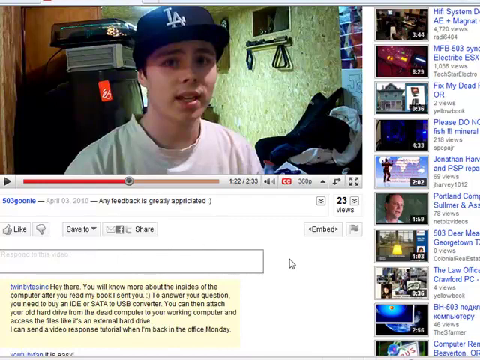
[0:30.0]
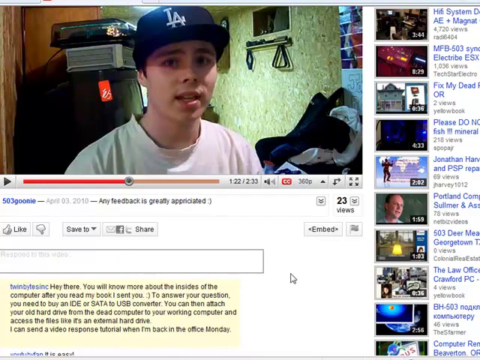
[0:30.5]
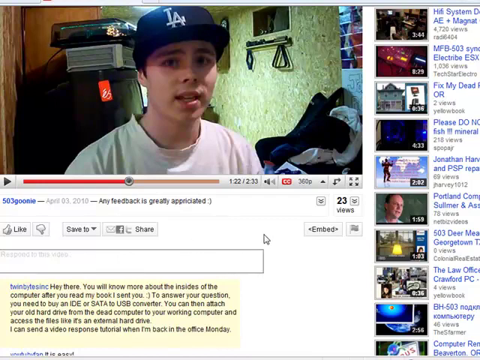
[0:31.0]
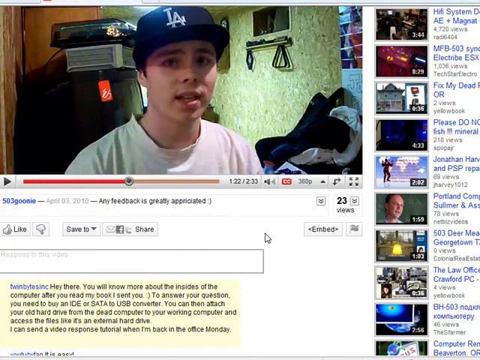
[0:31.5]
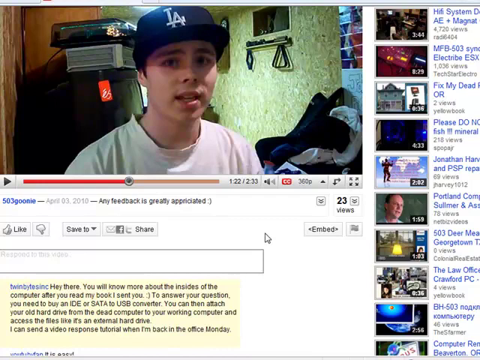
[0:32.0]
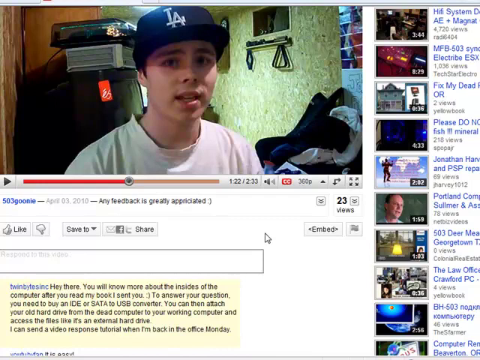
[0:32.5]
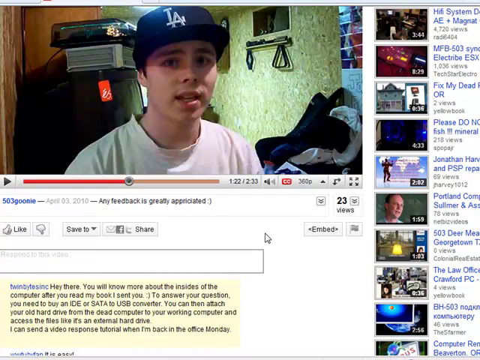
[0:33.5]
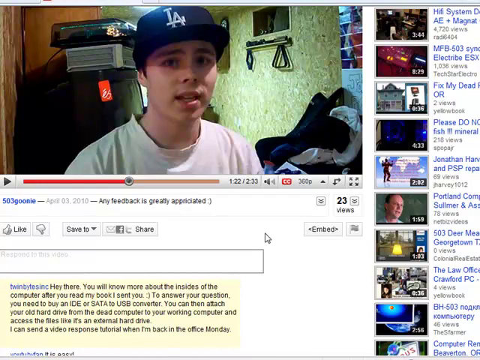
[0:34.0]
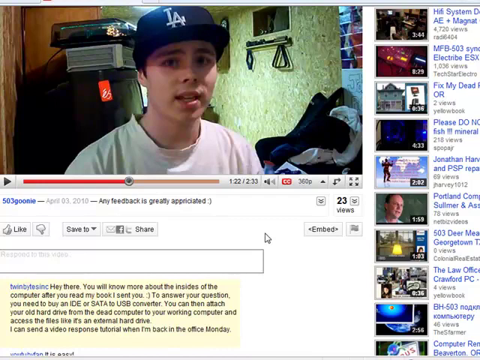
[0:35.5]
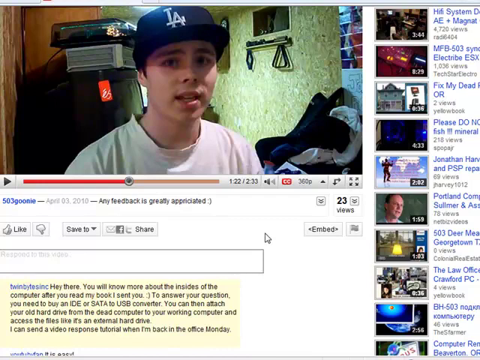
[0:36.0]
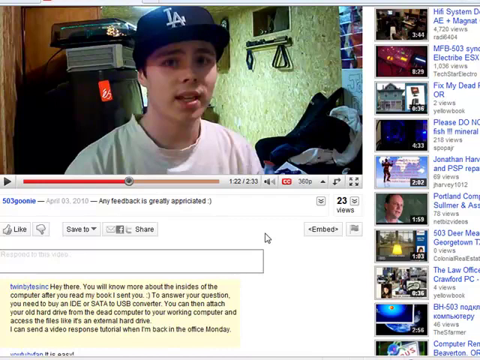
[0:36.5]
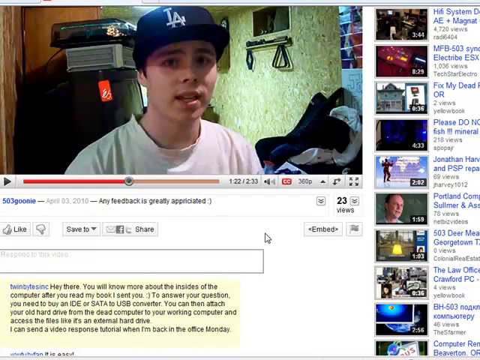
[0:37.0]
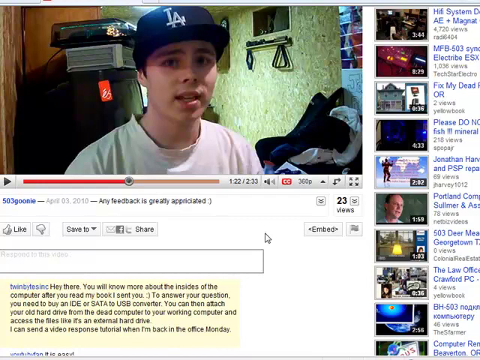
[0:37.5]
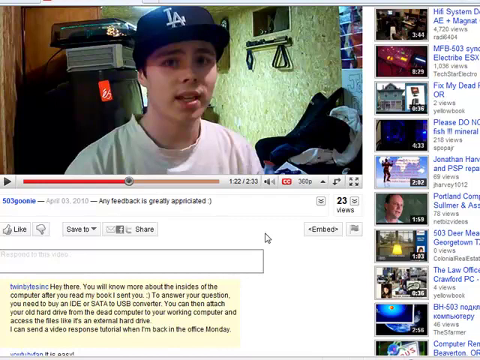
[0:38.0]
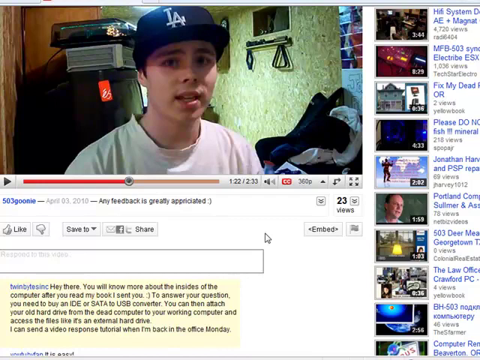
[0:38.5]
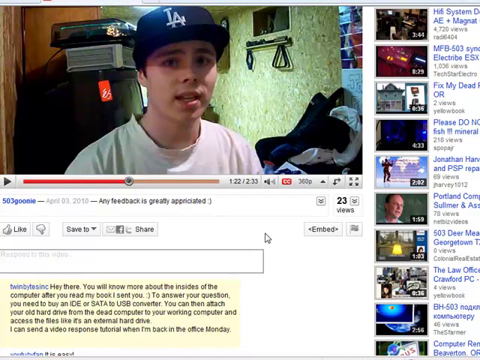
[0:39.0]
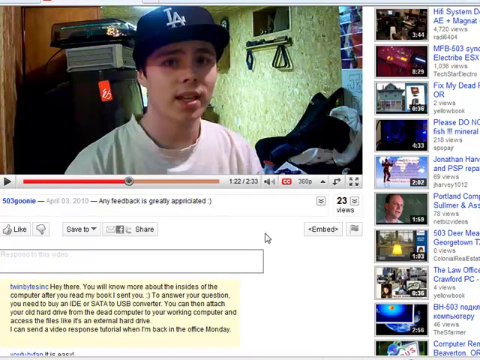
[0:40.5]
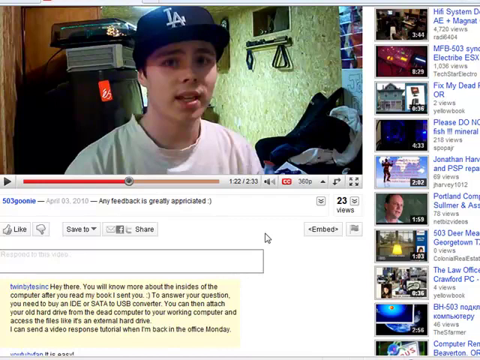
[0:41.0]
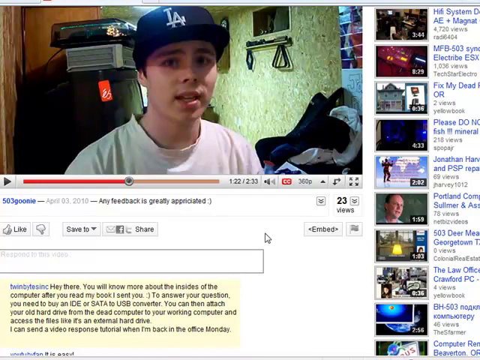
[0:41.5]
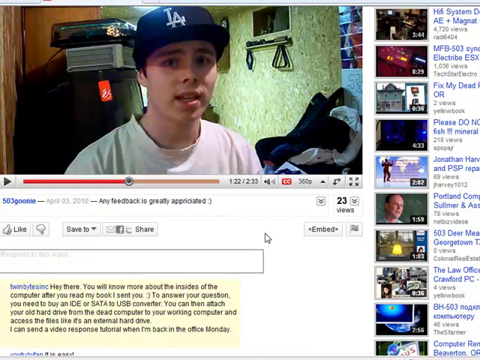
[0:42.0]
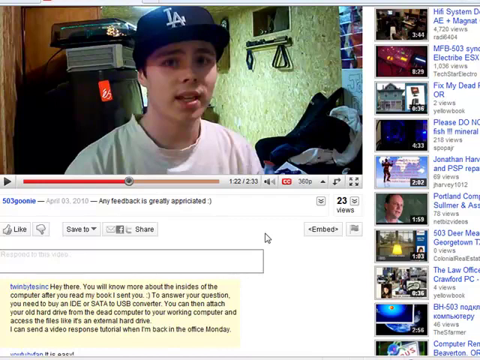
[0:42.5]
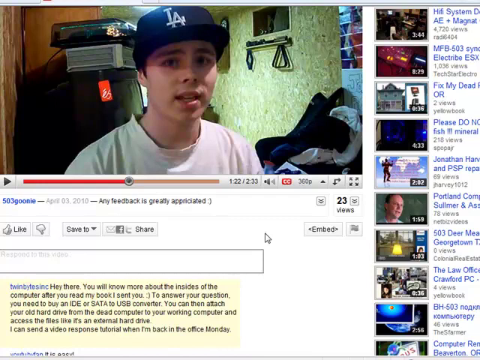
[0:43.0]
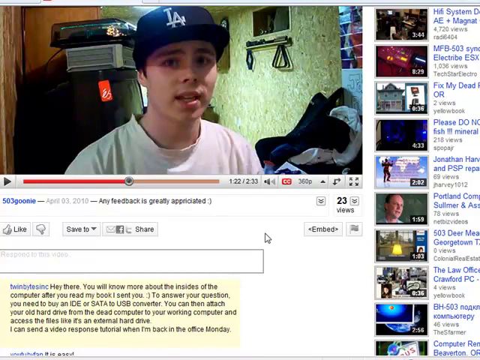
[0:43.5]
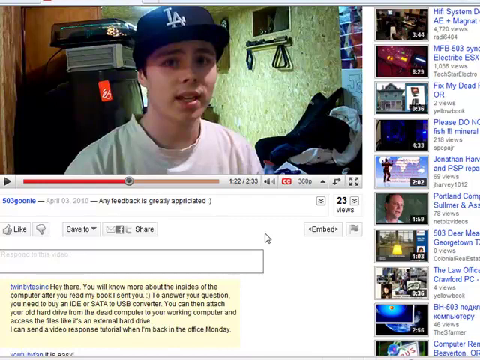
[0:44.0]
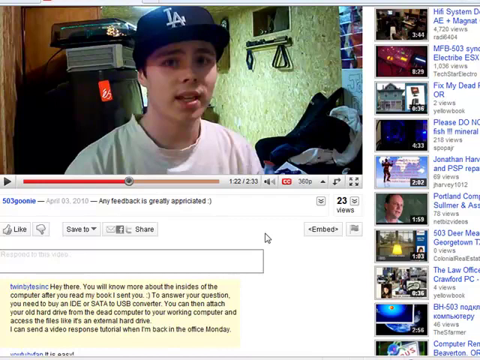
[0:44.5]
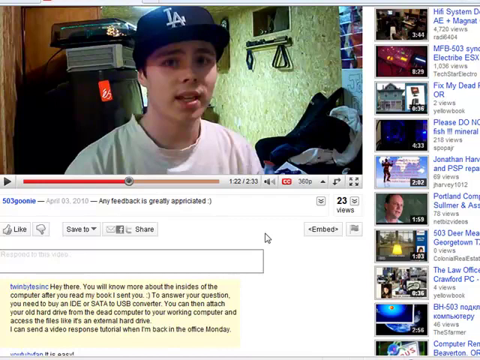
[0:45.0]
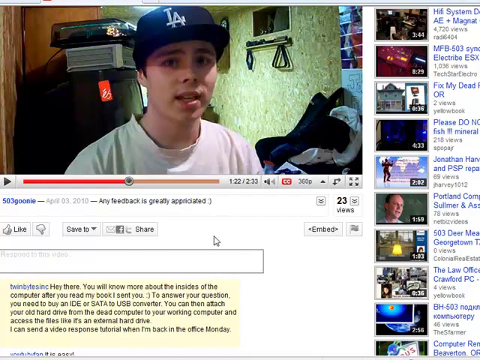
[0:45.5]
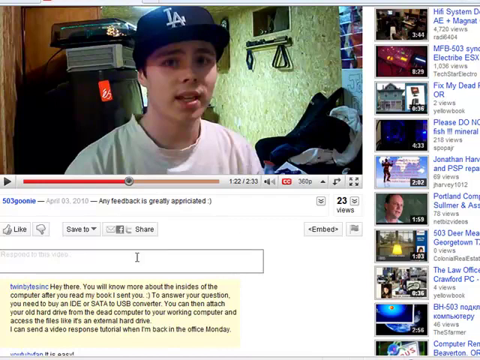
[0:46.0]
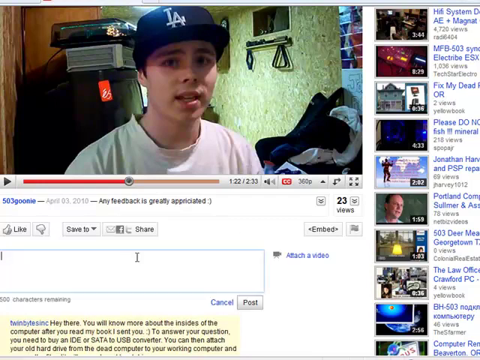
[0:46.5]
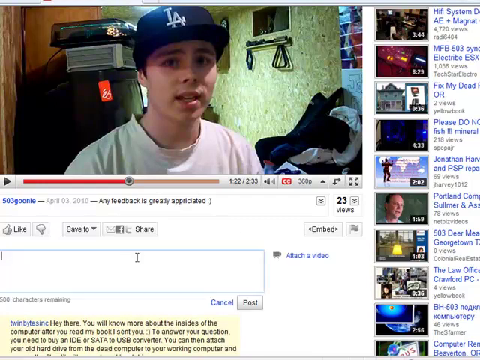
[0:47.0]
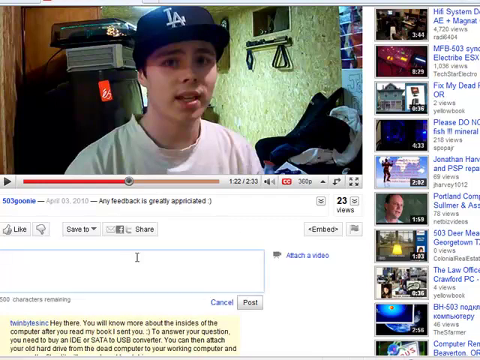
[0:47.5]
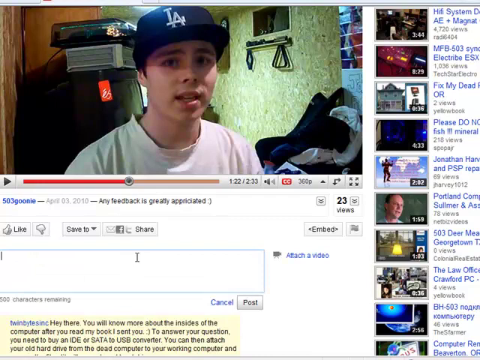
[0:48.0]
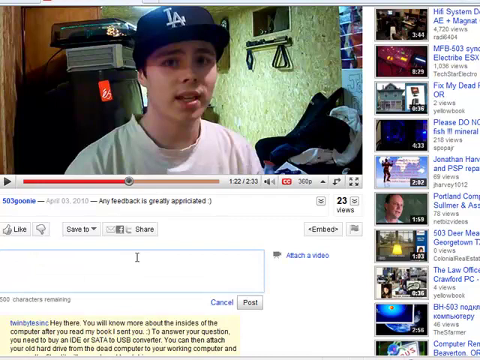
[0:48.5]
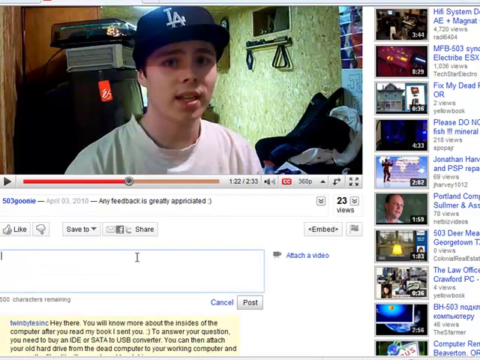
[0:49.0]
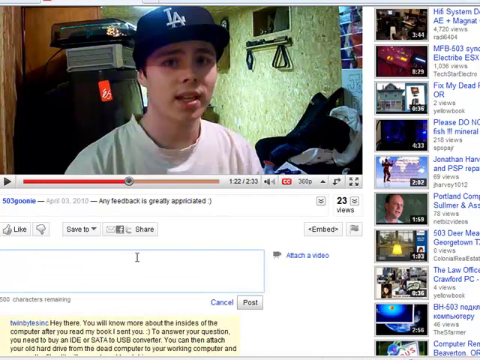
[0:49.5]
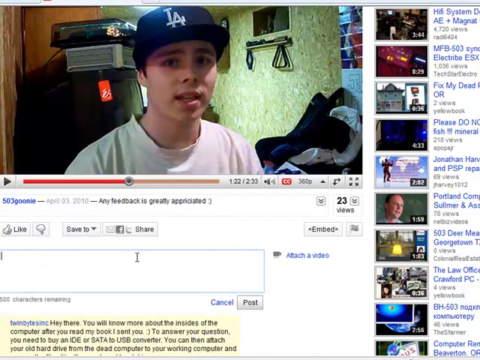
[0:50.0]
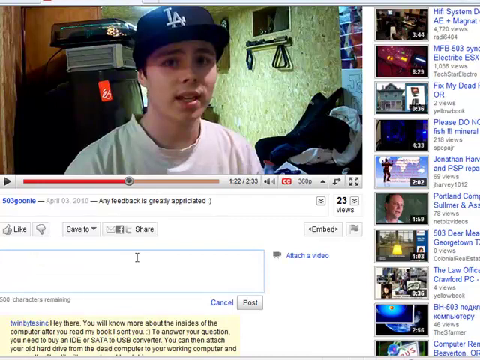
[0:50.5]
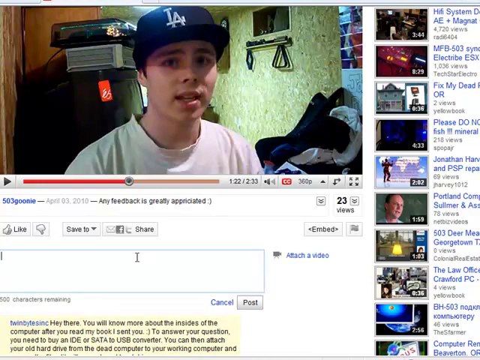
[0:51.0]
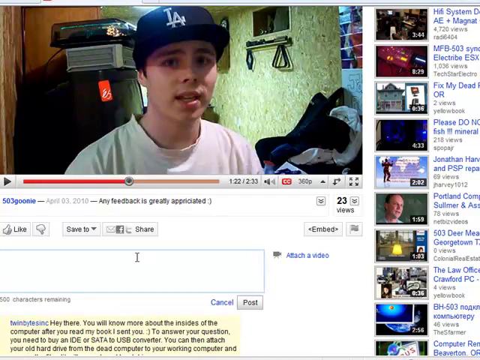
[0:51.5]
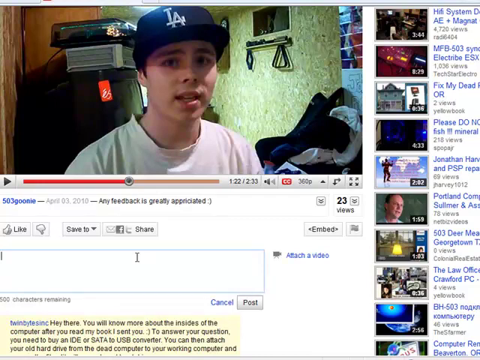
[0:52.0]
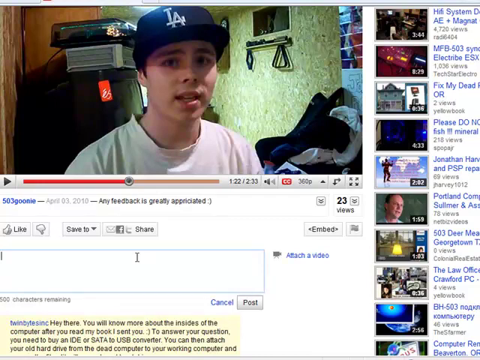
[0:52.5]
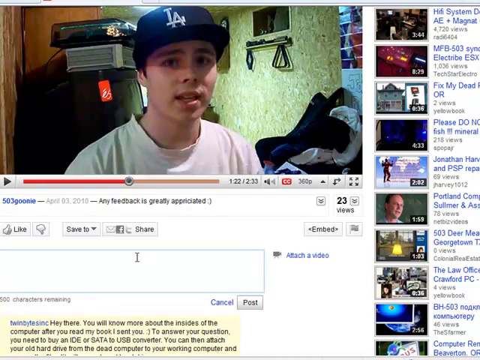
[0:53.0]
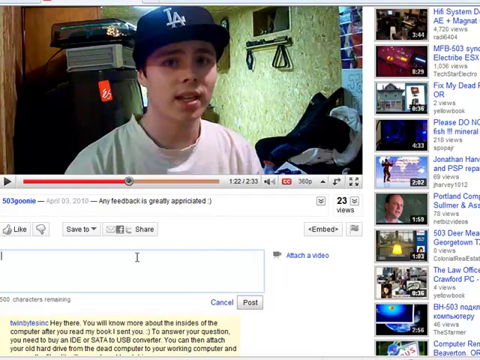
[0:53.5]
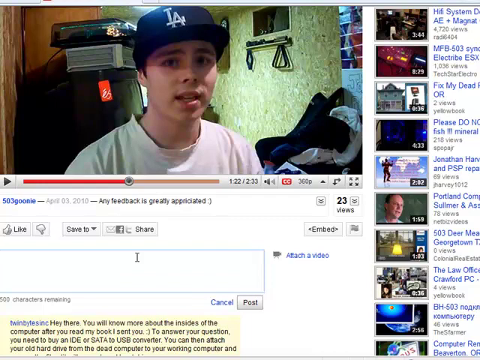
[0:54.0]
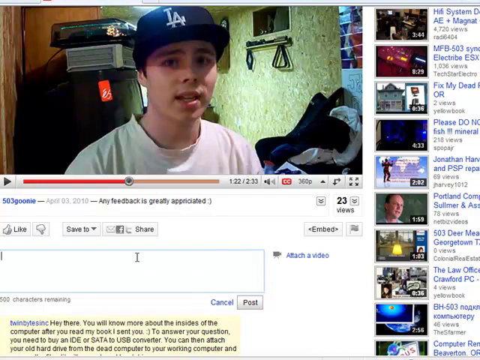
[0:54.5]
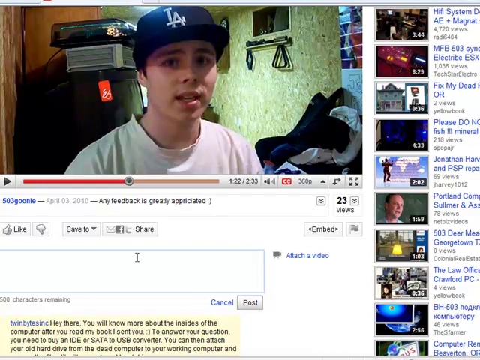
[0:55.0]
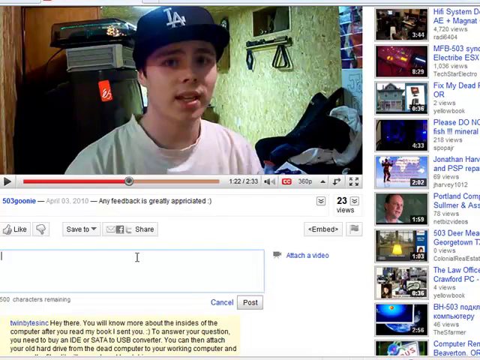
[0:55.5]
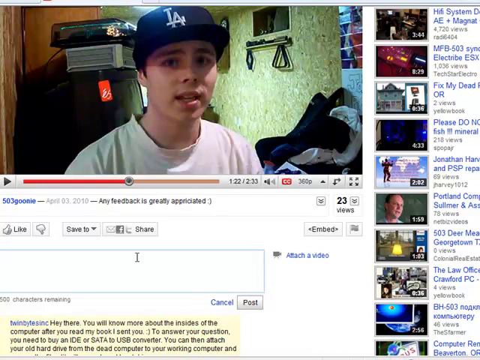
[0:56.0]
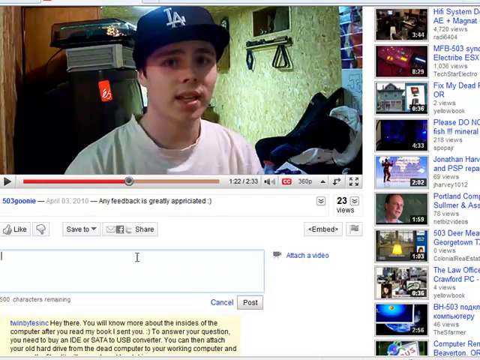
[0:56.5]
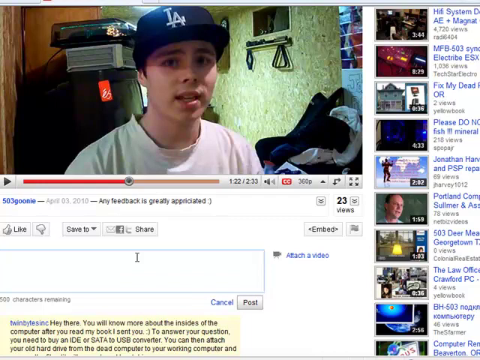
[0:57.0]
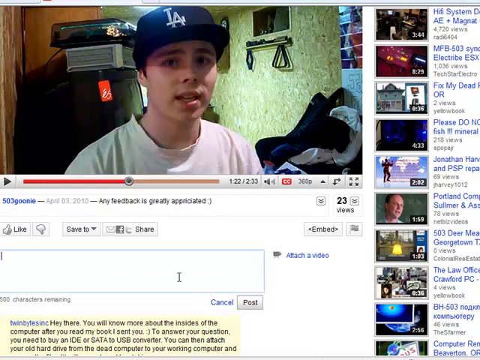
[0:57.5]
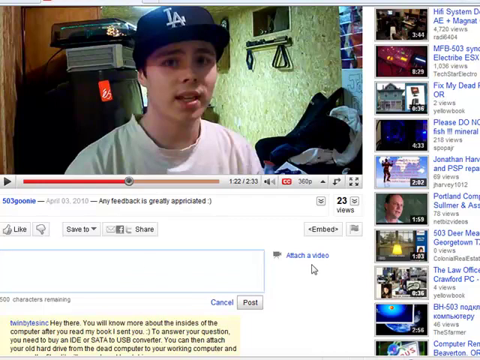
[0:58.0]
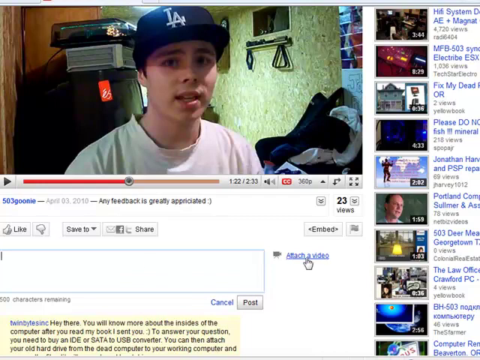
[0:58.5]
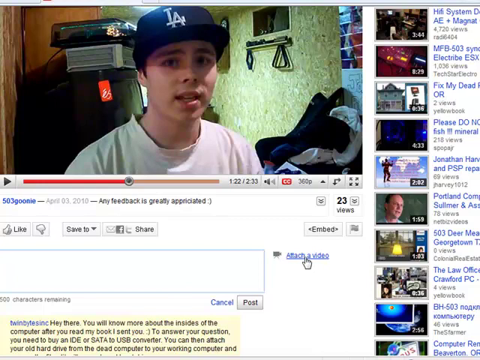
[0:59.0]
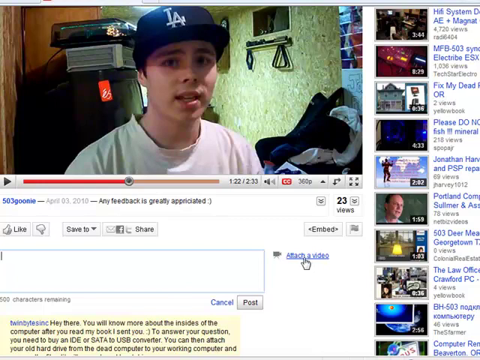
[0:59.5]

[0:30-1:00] The mouse pointer continues to make small movements just to the right of the comment box below the video, then clicks in the comment box. The cursor flashes on the left side of the box, but no text is entered. The pointer then moves to the right and hovers over the "attach a video" hyperlink. Just below the YouTube video, the username is 503goonie, the video was posted on April 2, 2016, and there is a comment, "any feedback is greatly appreciated", followed by a smiley face made of a colon and a close-bracket. The video has 23 views. The interface appears to be a very old version of YouTube. Nine suggested videos are listed down the right-hand side of the screen.